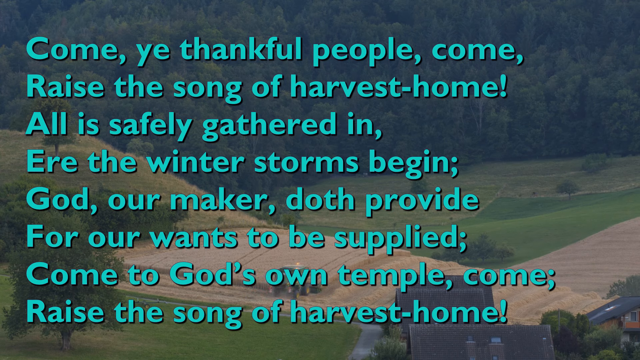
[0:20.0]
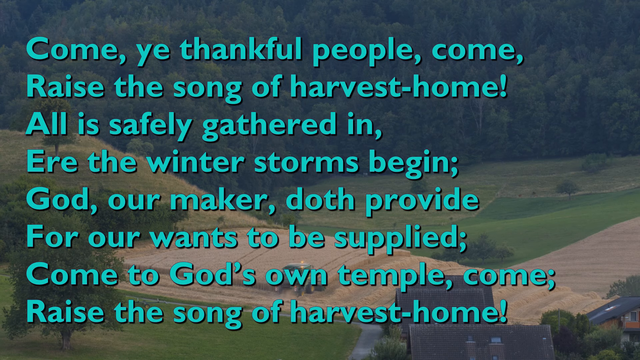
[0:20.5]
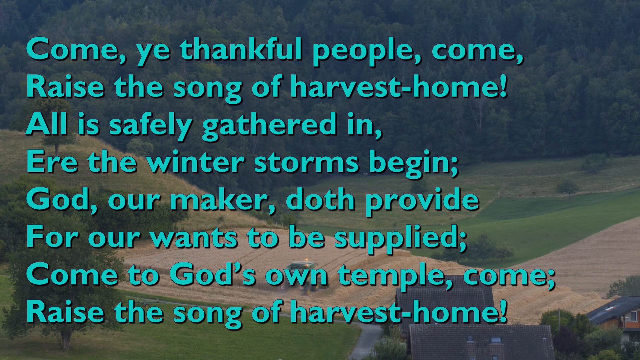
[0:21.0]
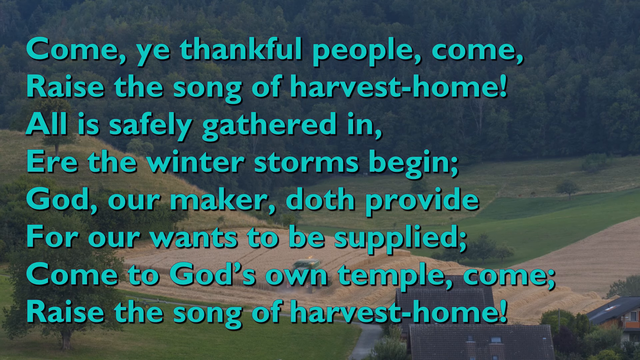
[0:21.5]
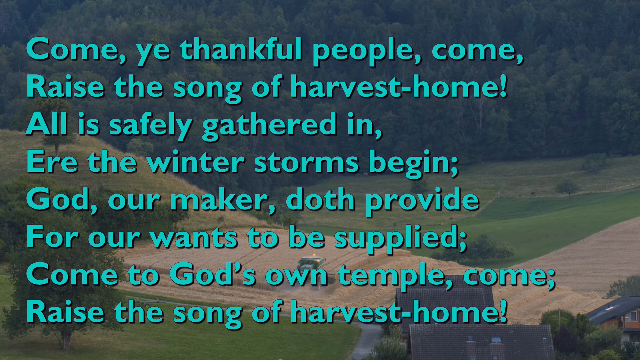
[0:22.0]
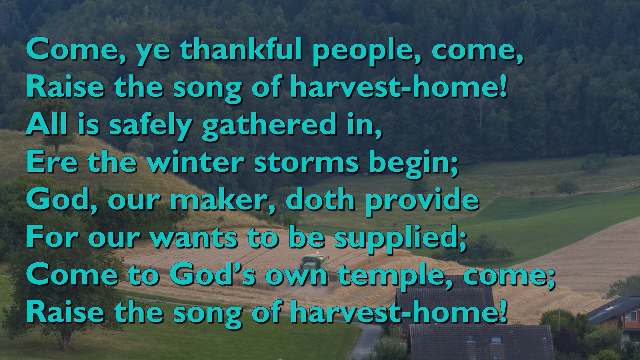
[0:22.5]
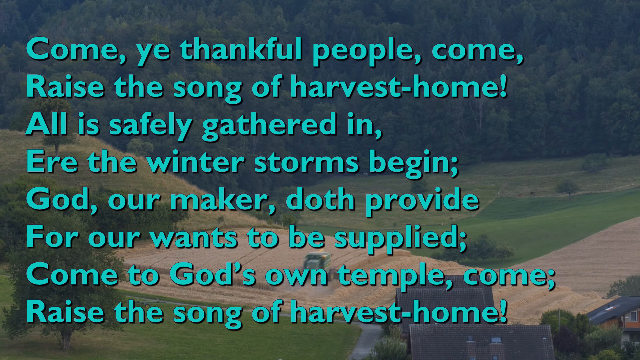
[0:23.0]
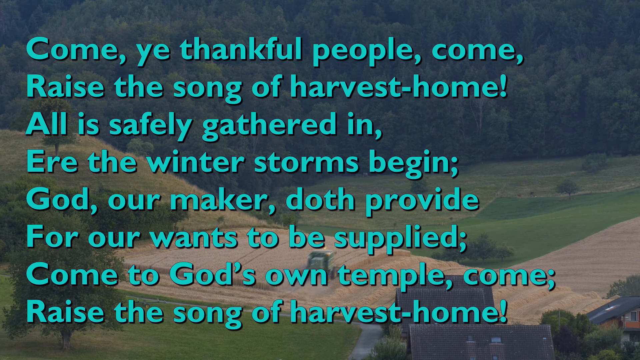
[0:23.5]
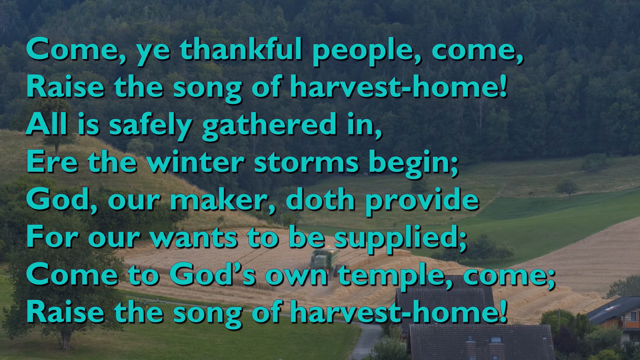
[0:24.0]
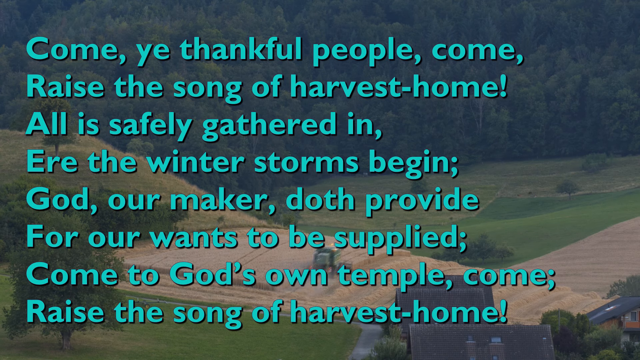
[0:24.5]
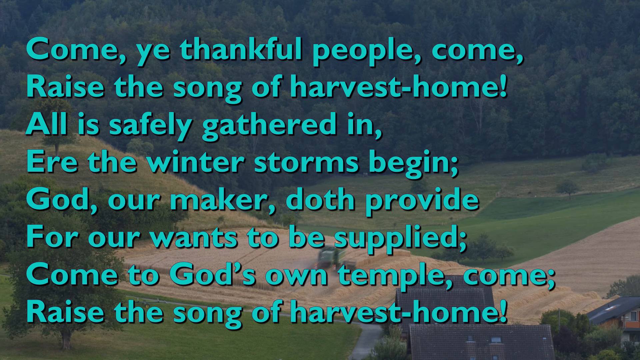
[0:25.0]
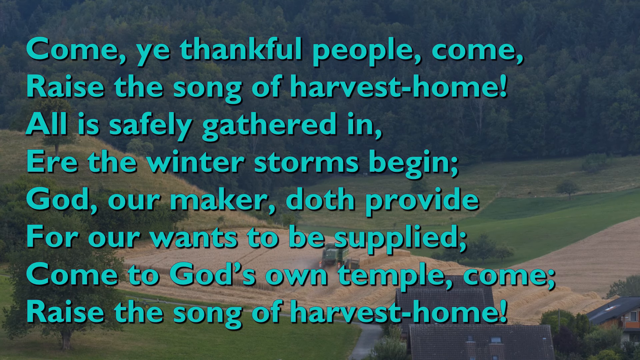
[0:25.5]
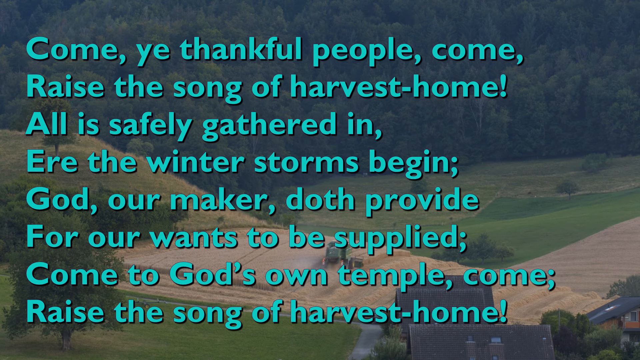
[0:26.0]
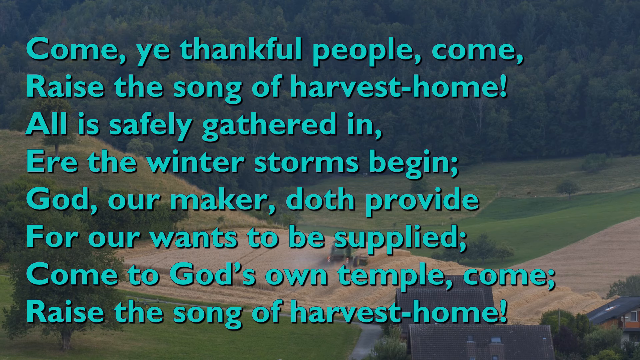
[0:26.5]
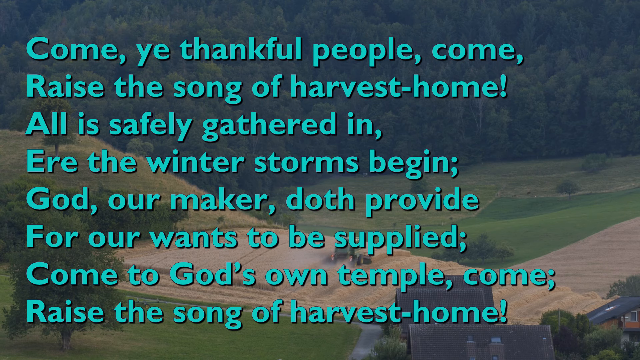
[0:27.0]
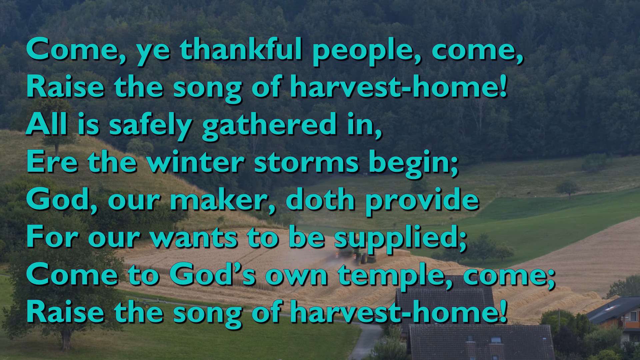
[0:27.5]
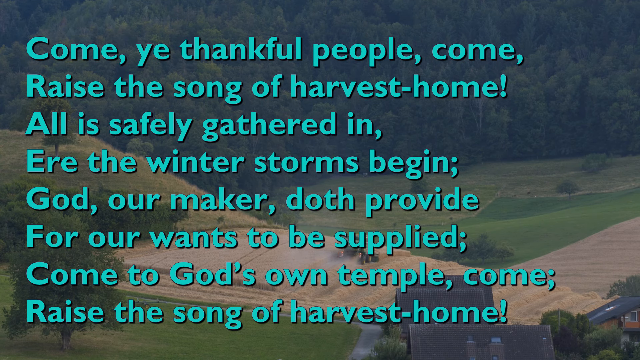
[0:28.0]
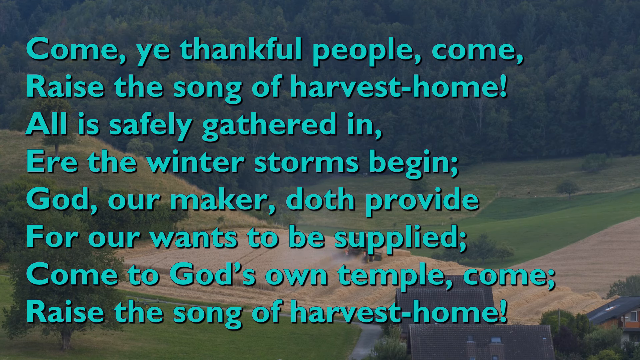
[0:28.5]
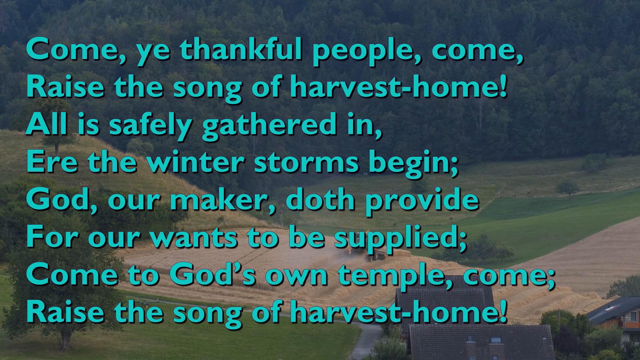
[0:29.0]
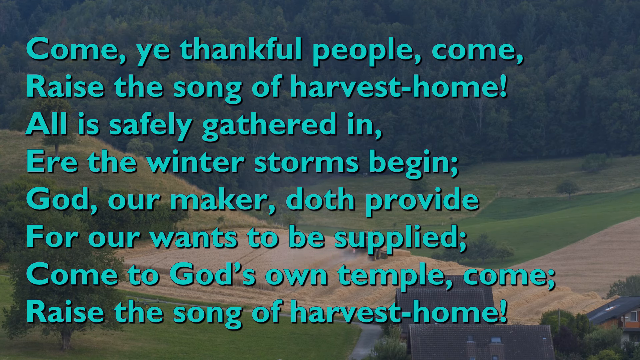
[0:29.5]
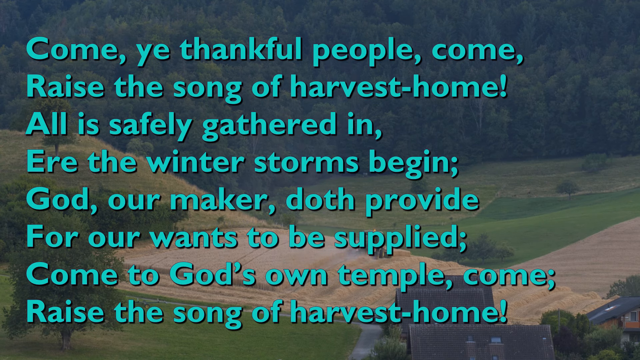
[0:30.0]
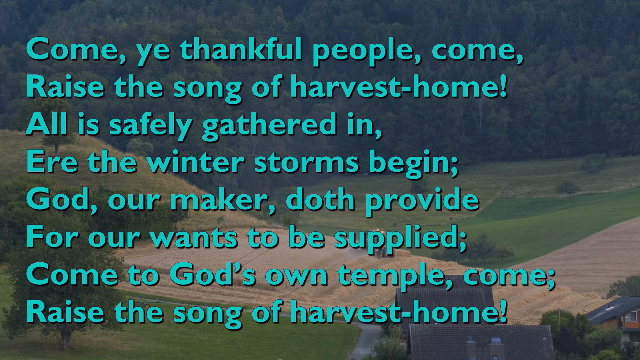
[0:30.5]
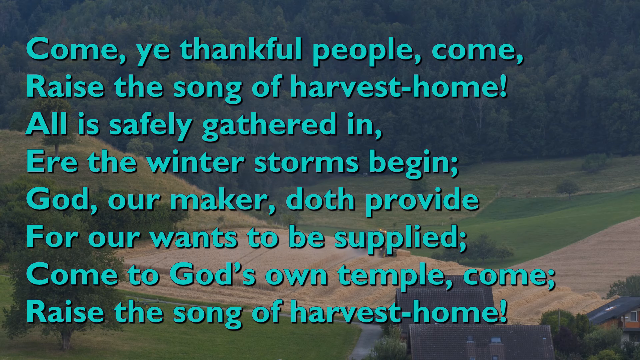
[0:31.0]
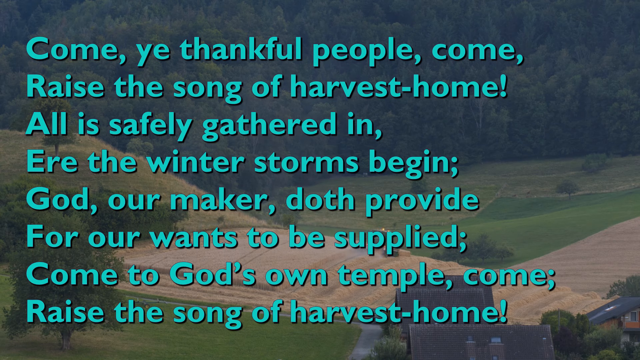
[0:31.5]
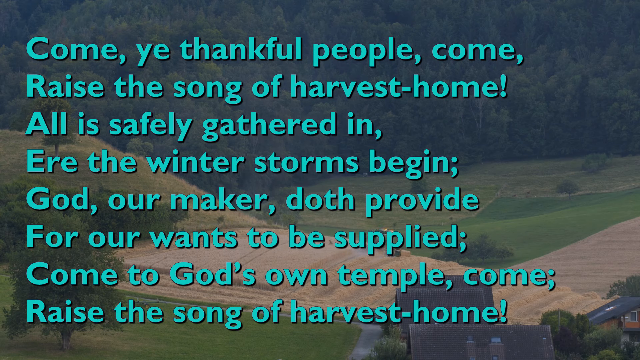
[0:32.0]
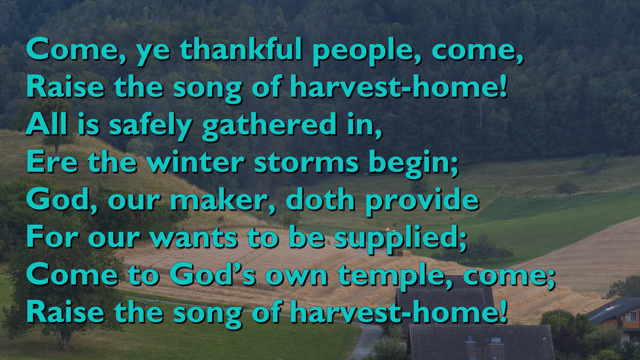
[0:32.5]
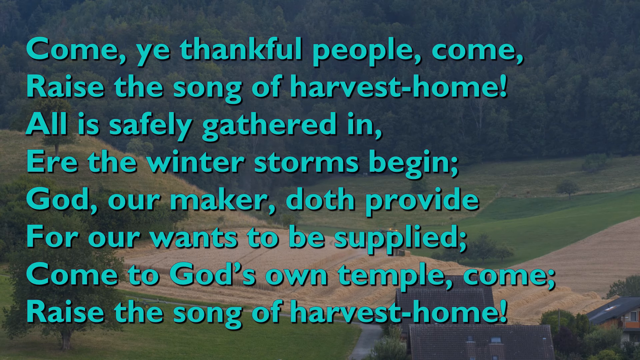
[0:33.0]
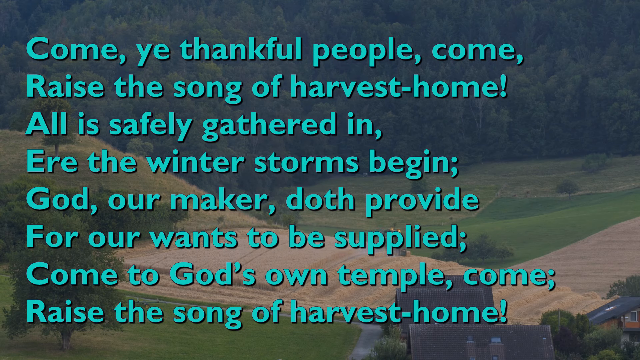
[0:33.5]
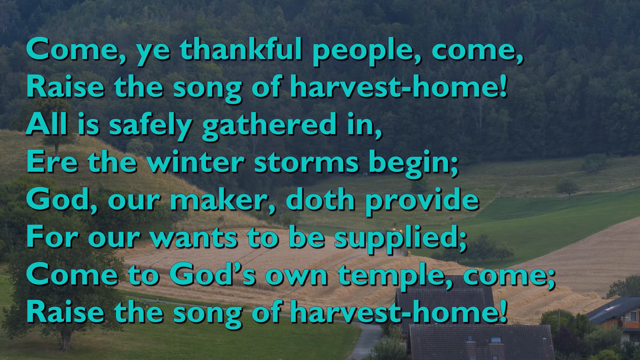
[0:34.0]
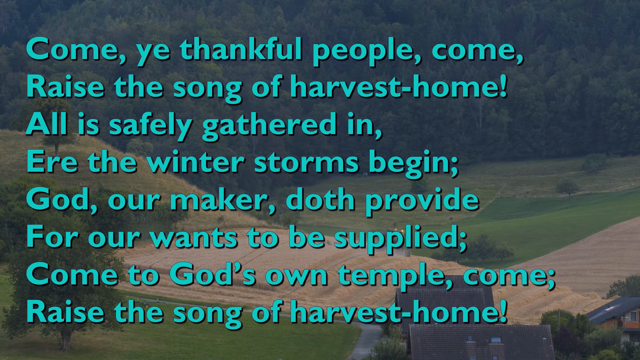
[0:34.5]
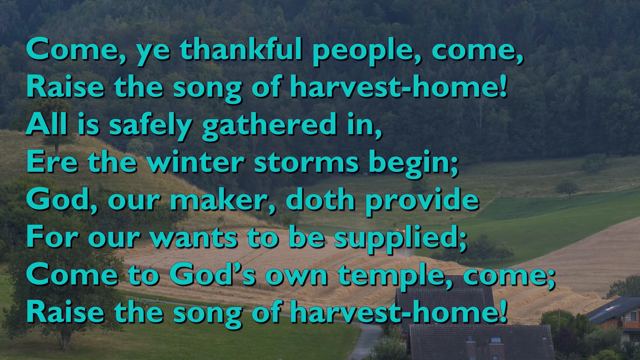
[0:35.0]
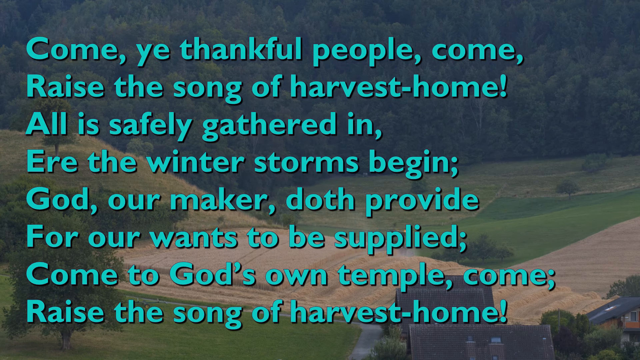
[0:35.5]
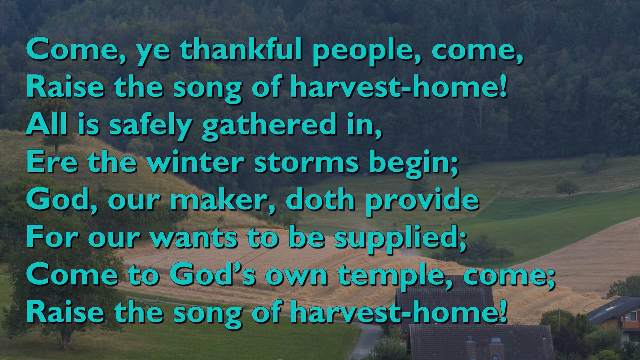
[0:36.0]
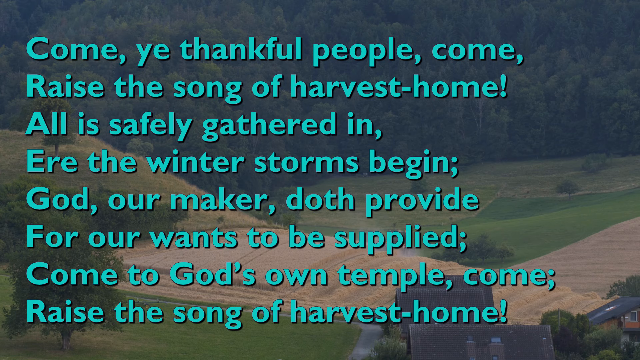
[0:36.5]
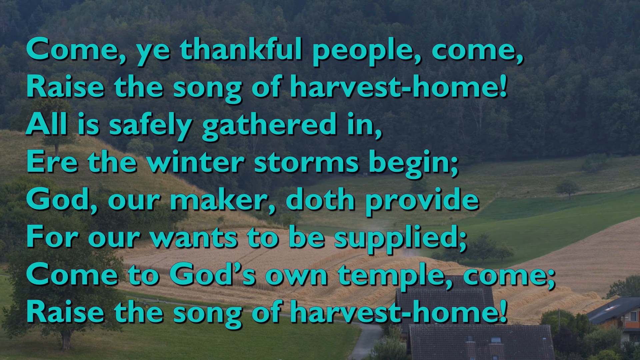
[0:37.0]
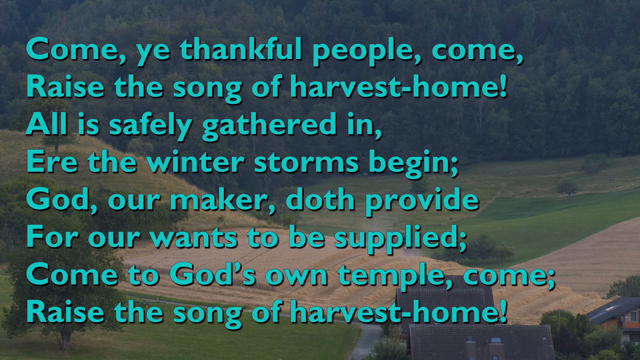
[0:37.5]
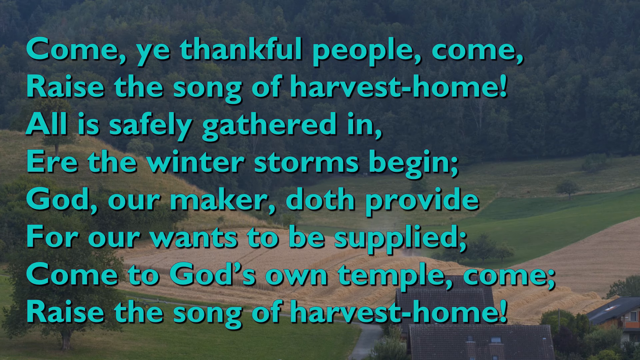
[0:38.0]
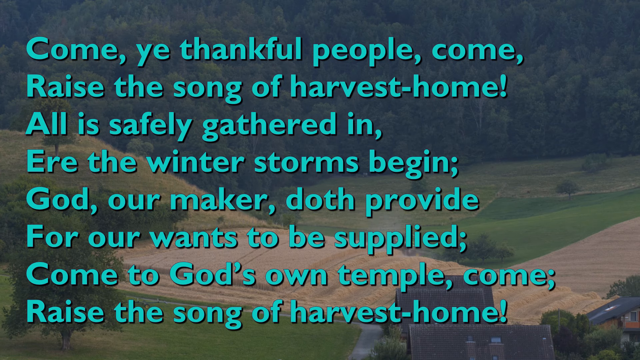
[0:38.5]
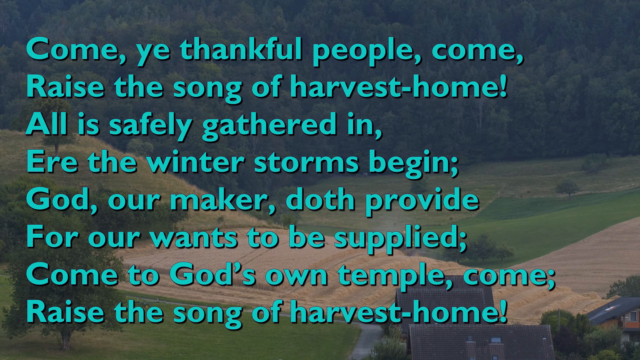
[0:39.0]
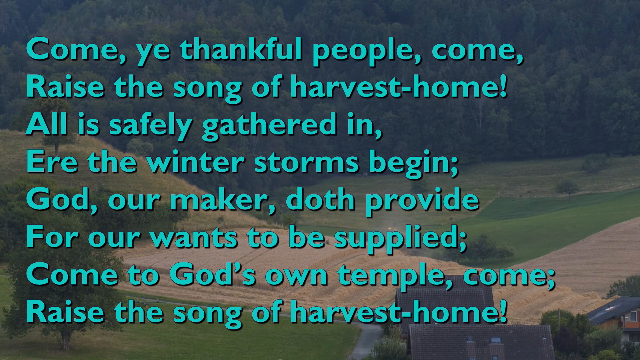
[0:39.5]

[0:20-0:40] A landscape scene is filled with tall green pine trees. In front of the pine trees is a grass field, and beside that is a finer cut field of small, turf-looking dark green grass. Beside that, another part of the field looks like wheat; it is brown and goes up onto the side of a hillside, where a green machine is cutting the wheat down. Across the screen, in a greenish turquoise color, the text reads: "Come ye thankful people come raise a song of harvest home all is safely gathered in ere the winter storm begins God our maker doth provide for our wants to be supplied come to God's own temple come raise the song of harvest home."